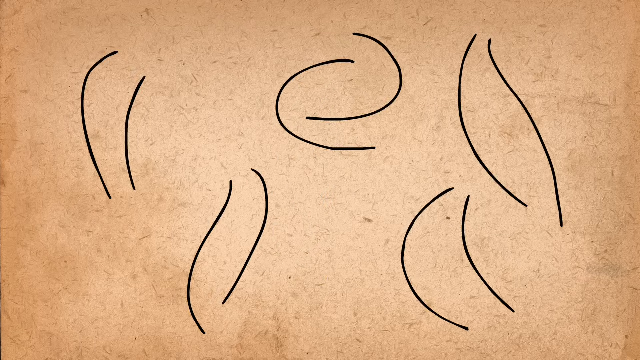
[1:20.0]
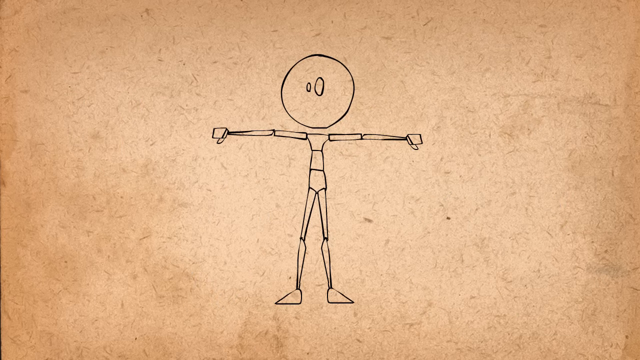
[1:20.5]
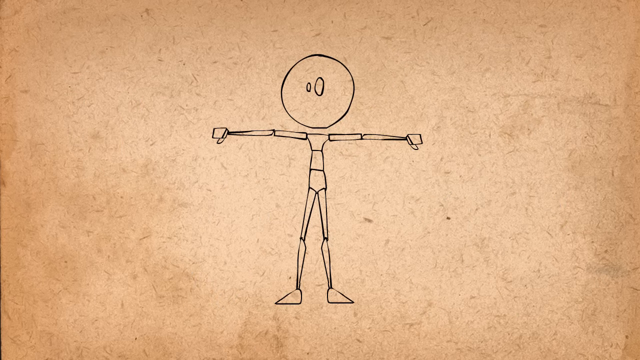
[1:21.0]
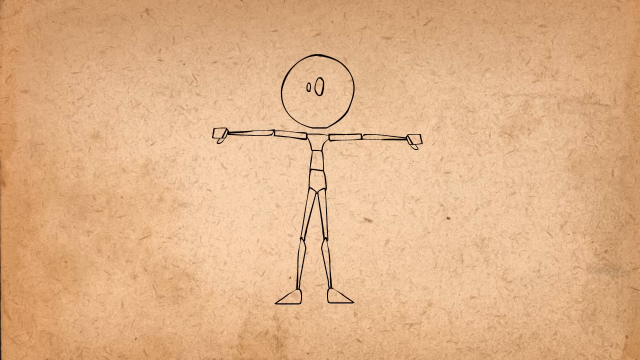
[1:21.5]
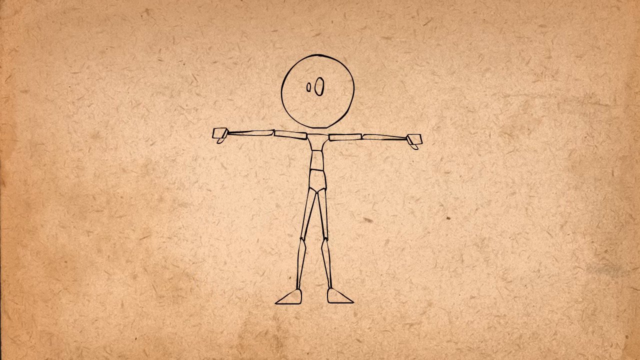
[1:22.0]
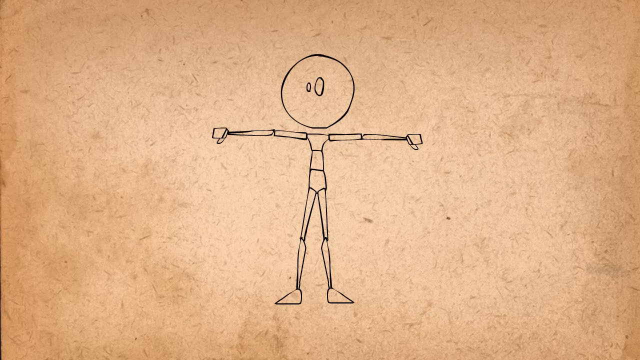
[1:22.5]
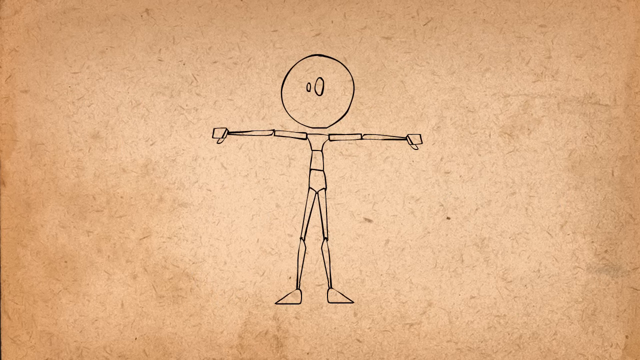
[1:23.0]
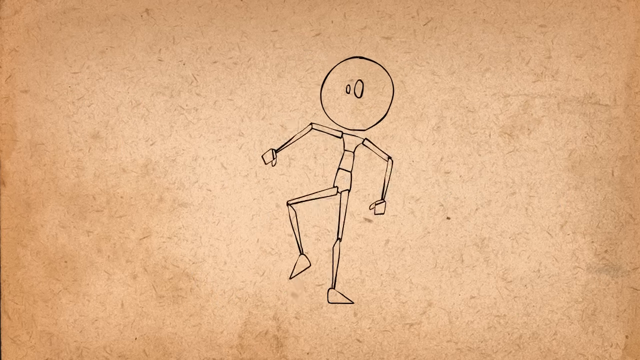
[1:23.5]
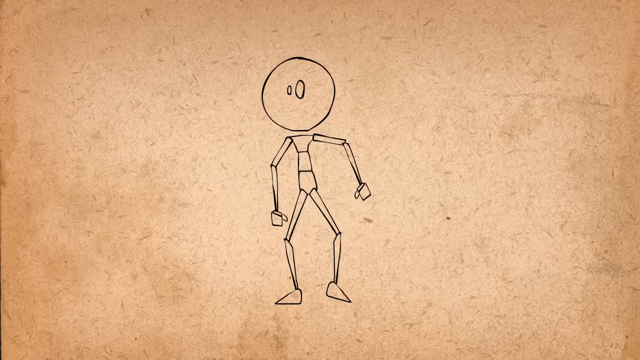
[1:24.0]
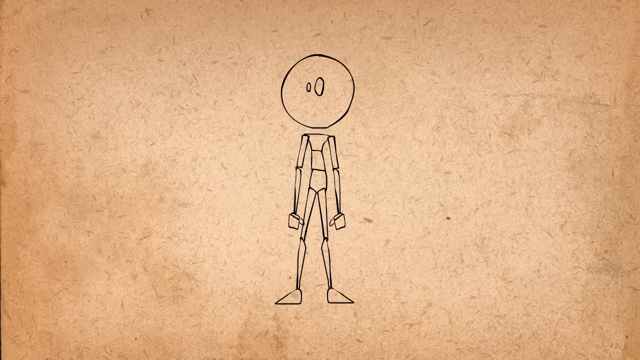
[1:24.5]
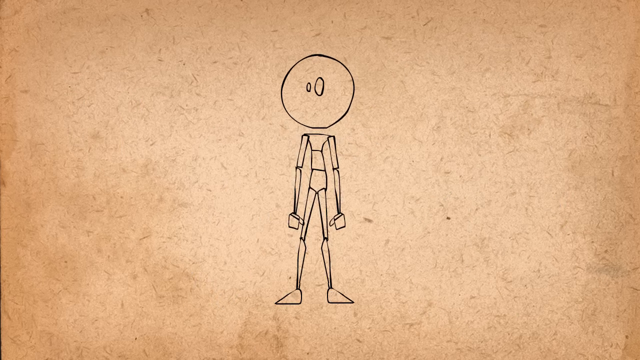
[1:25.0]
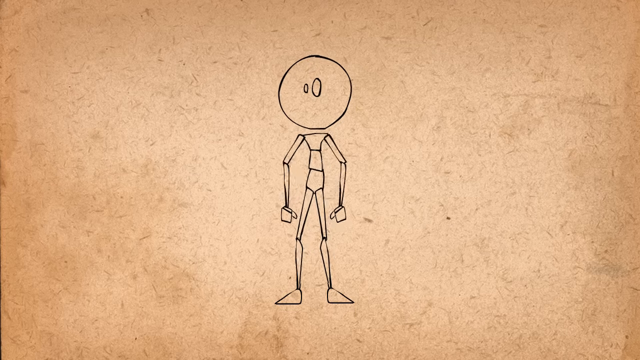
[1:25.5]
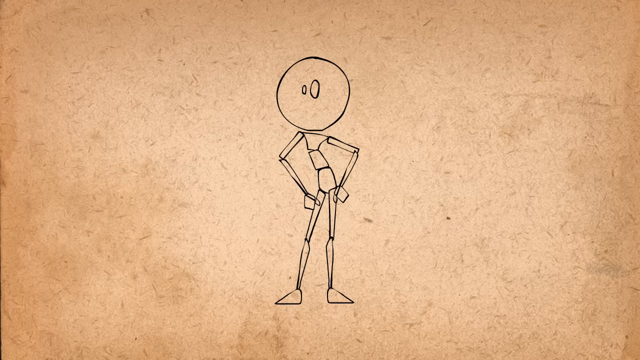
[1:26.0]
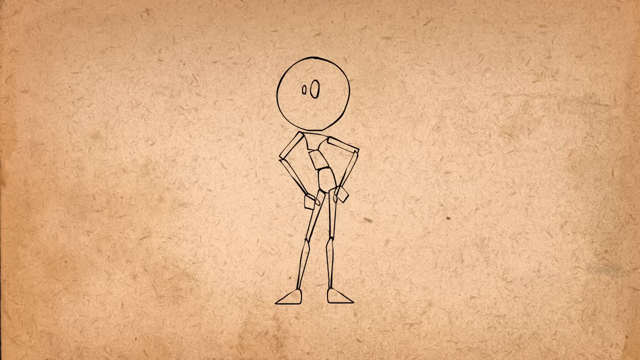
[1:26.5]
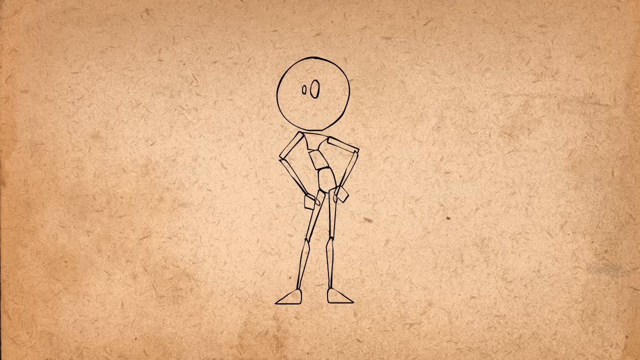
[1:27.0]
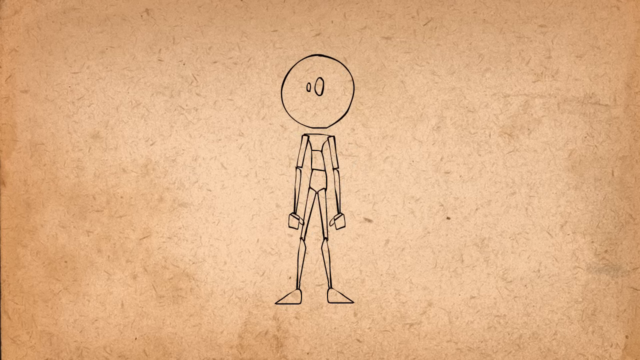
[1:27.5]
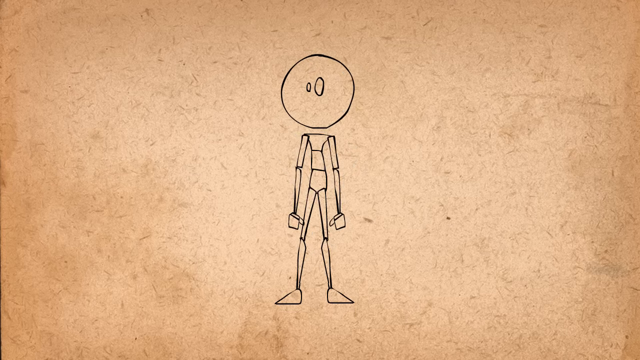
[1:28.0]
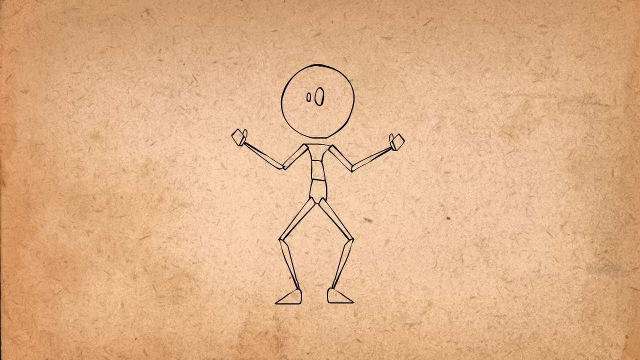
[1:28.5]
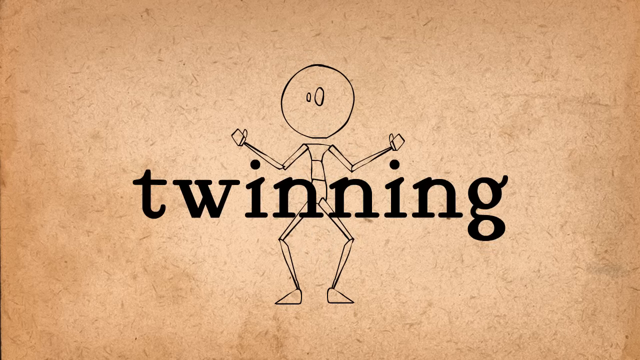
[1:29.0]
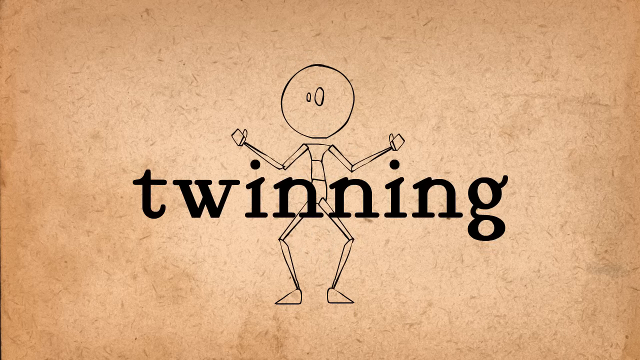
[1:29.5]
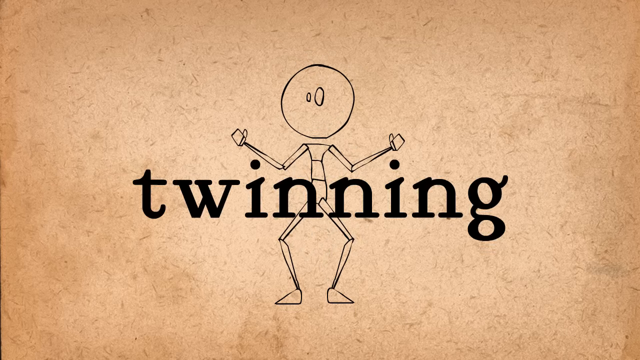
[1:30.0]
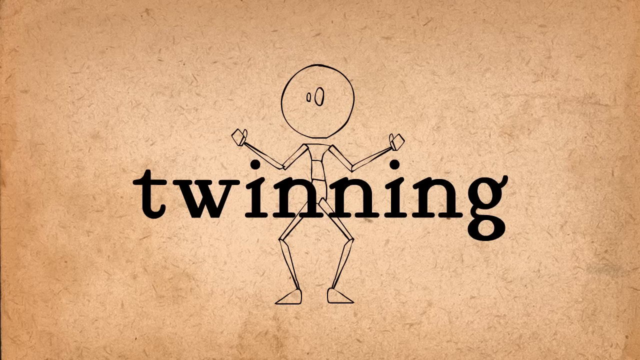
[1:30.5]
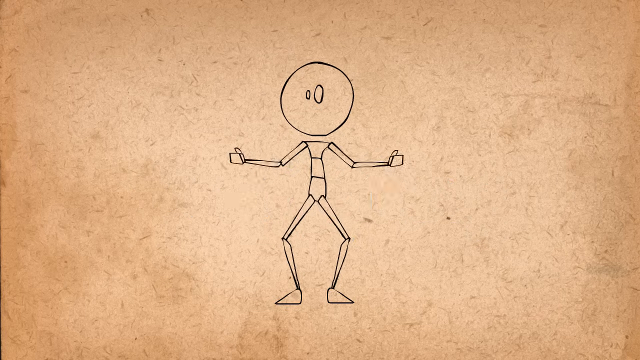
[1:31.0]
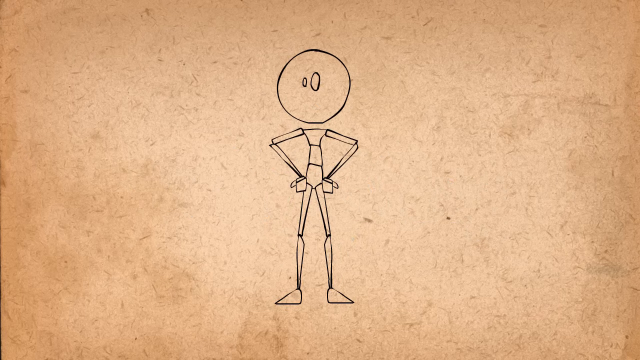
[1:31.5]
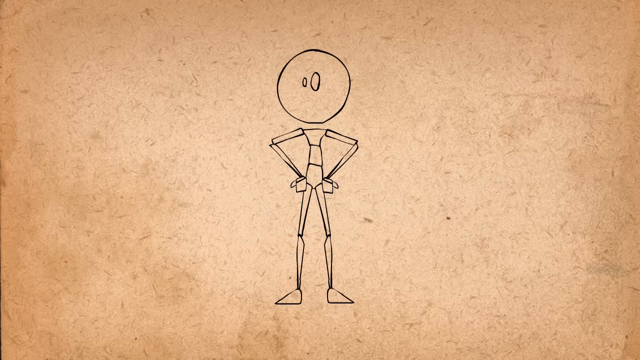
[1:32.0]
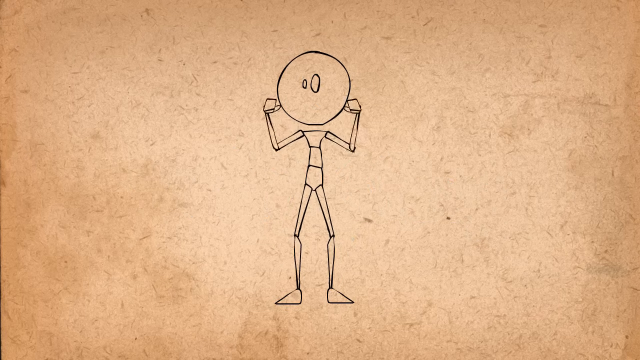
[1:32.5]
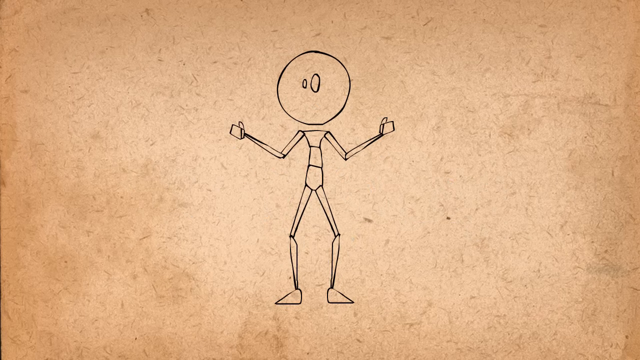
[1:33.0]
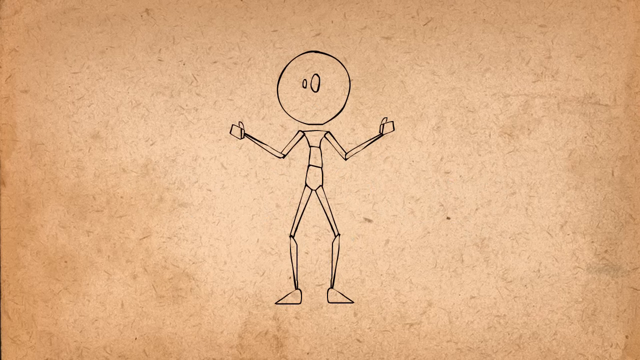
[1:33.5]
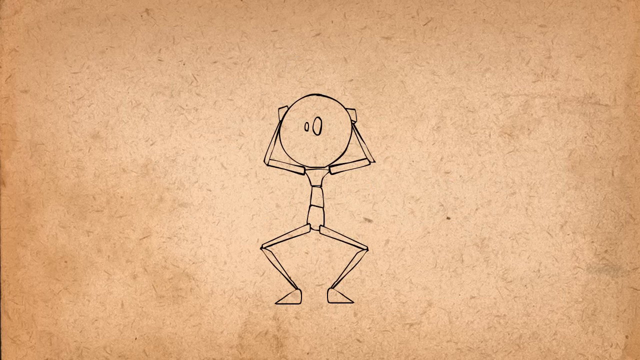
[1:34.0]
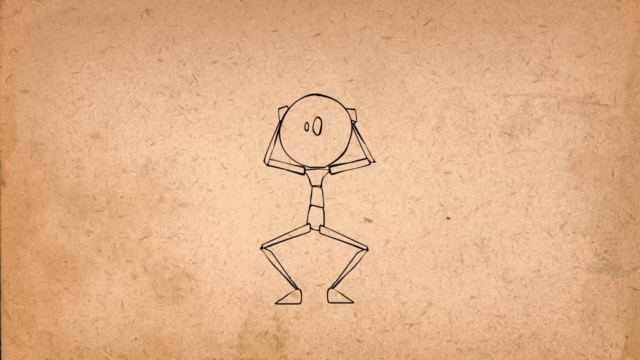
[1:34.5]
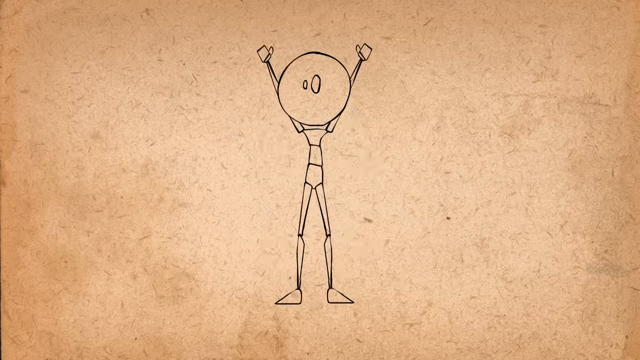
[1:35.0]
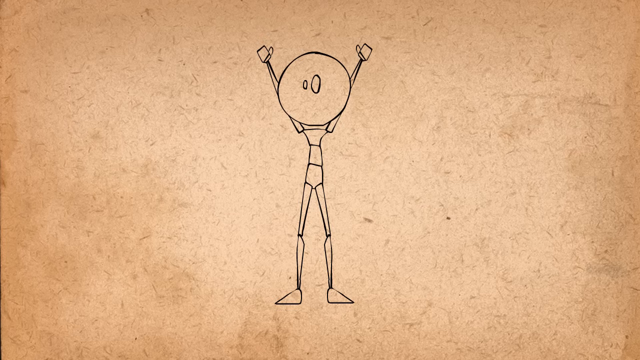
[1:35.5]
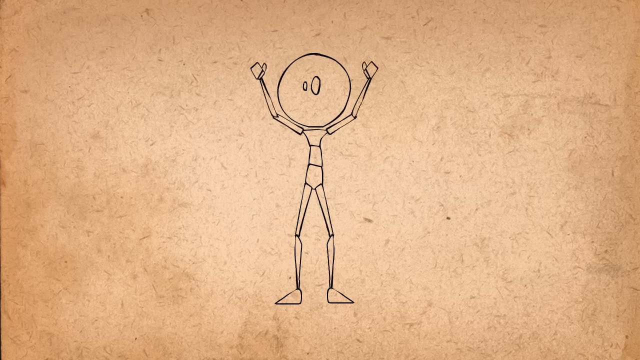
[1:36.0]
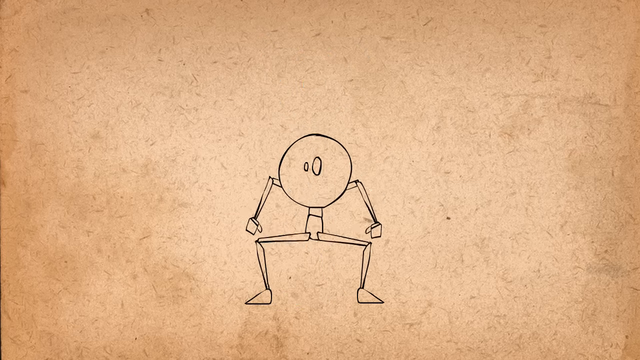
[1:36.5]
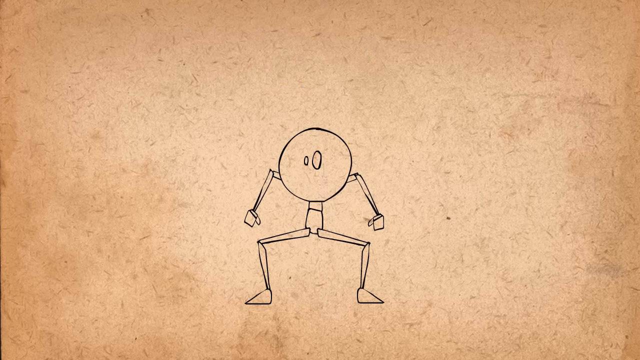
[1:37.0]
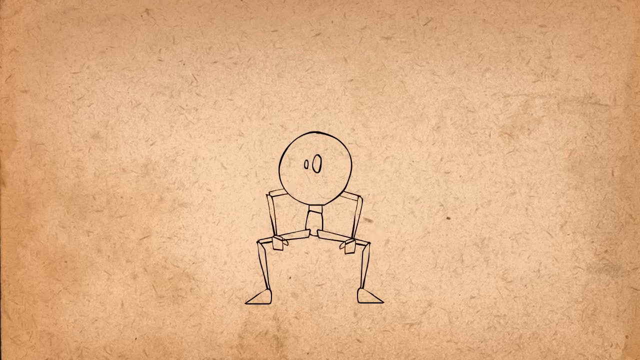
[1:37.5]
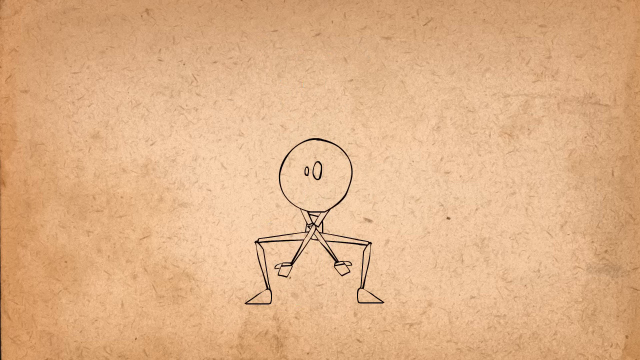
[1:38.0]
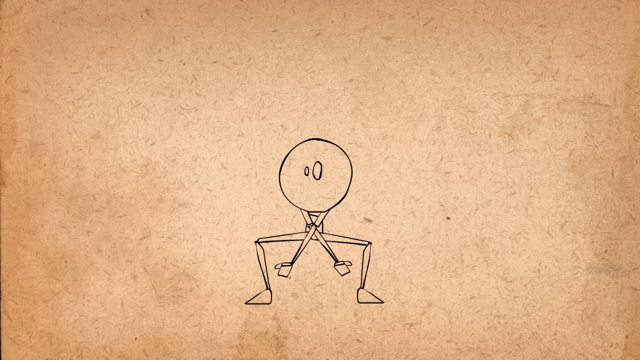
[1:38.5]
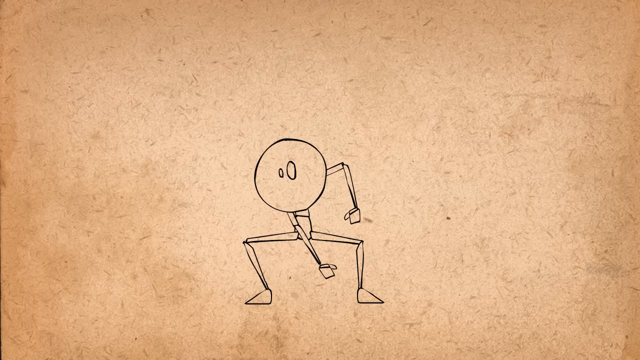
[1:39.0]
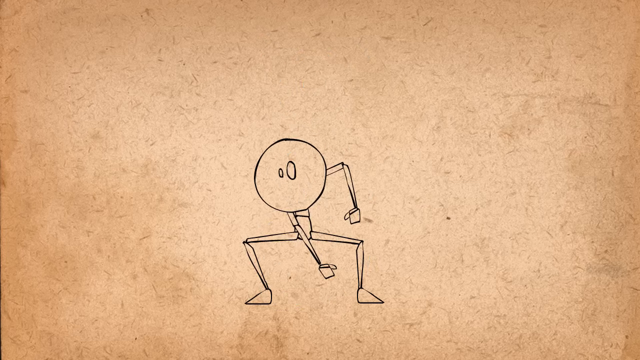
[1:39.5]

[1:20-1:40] In the solid drawing section, a very skinny person is drawn with a big circle for the head, sectioned shoulders, upper arms, lower arms and hands, three sections for the torso, and long skinny legs with a section for the knee and lower leg and a section for the ankle and foot. The person steps up with the right and then steps down, demonstrating how different movements look when drawn. At the end, black letters read "twinning."